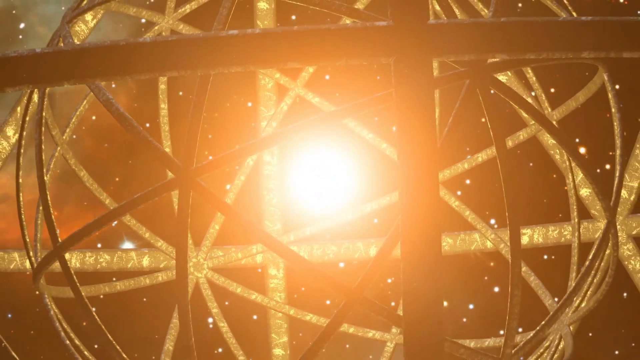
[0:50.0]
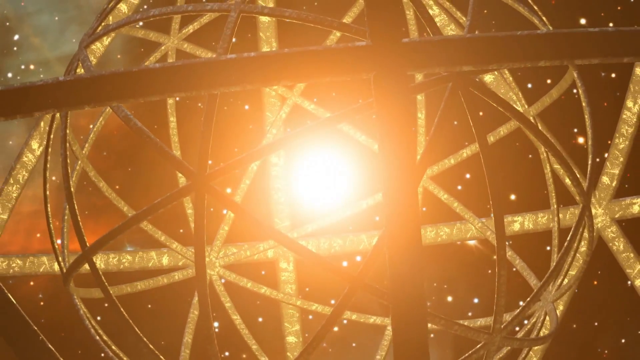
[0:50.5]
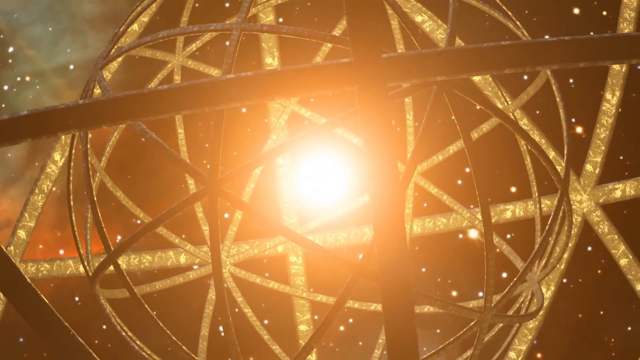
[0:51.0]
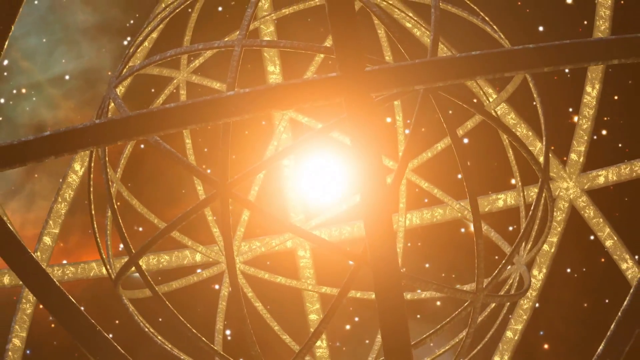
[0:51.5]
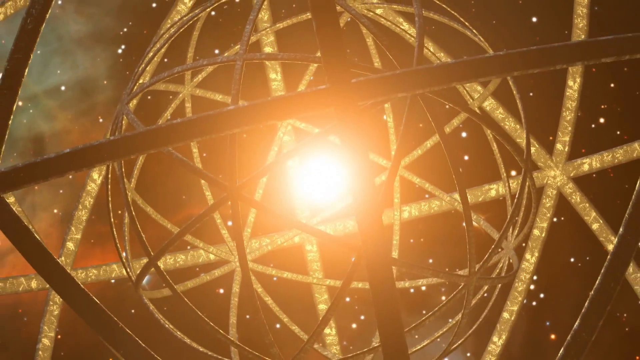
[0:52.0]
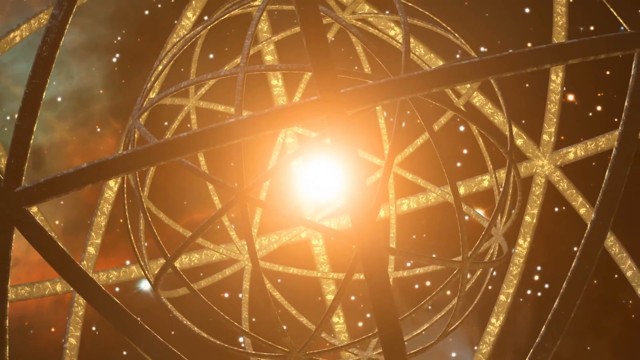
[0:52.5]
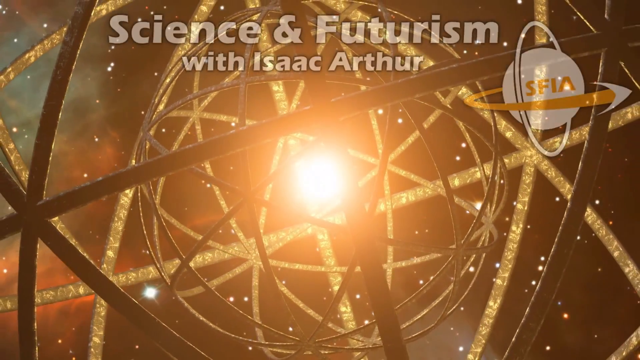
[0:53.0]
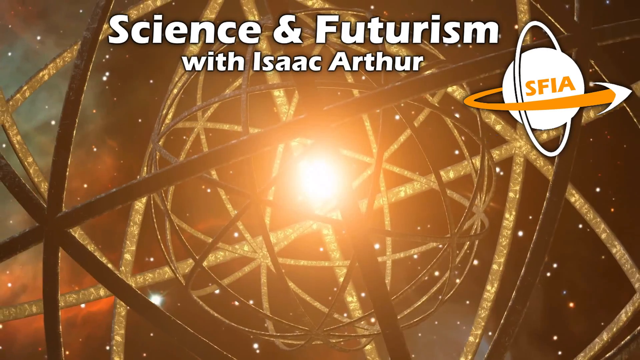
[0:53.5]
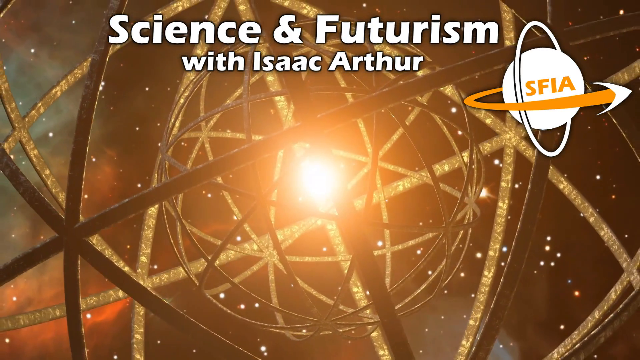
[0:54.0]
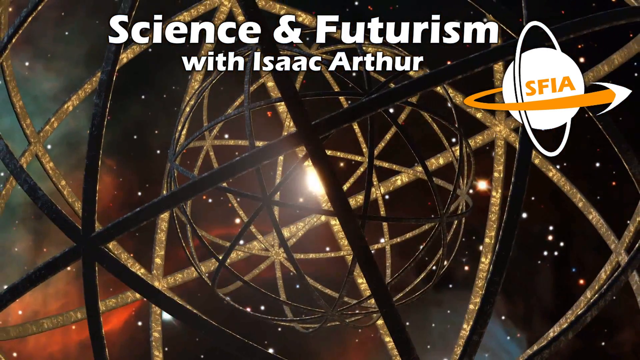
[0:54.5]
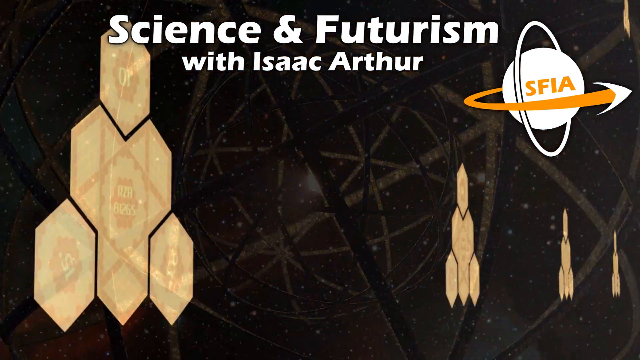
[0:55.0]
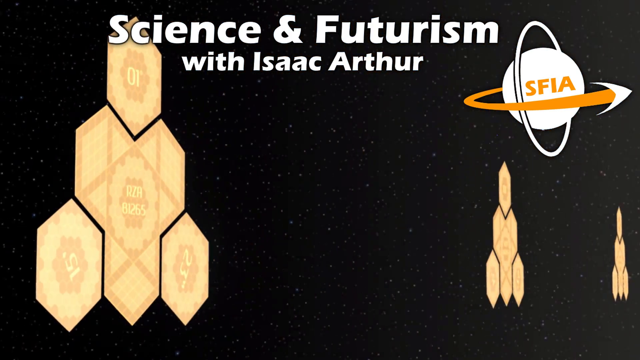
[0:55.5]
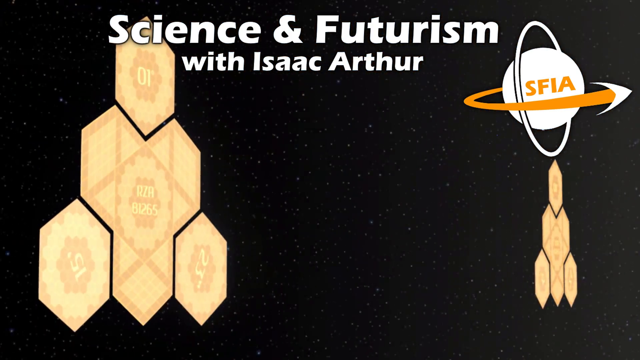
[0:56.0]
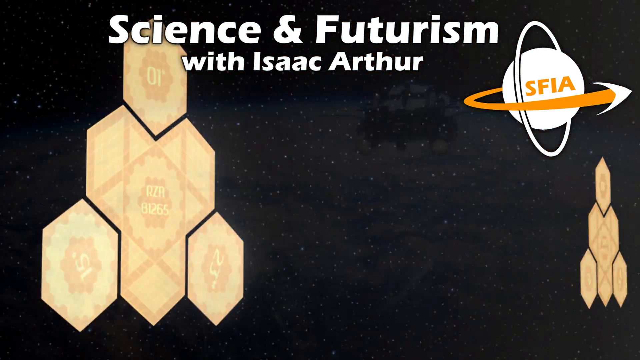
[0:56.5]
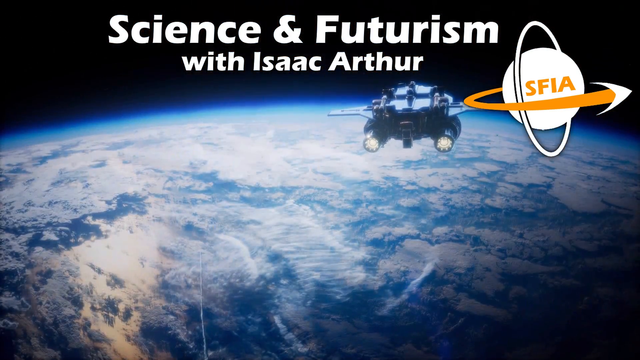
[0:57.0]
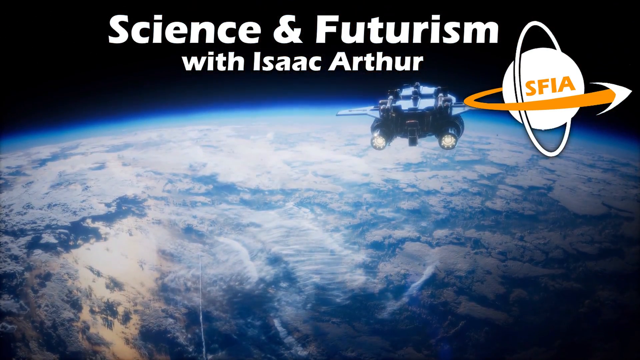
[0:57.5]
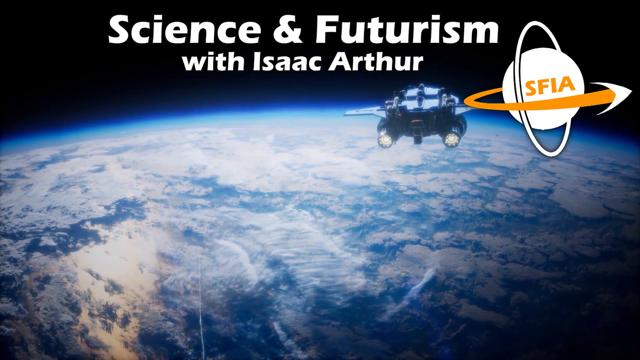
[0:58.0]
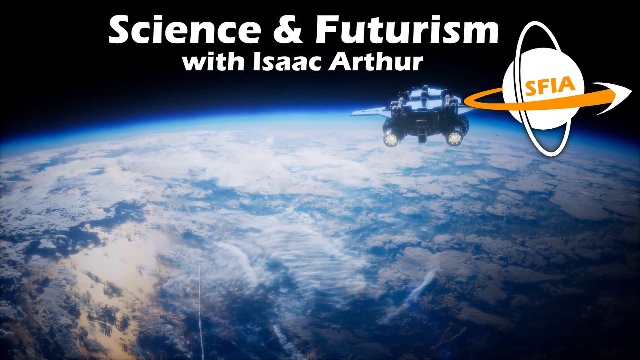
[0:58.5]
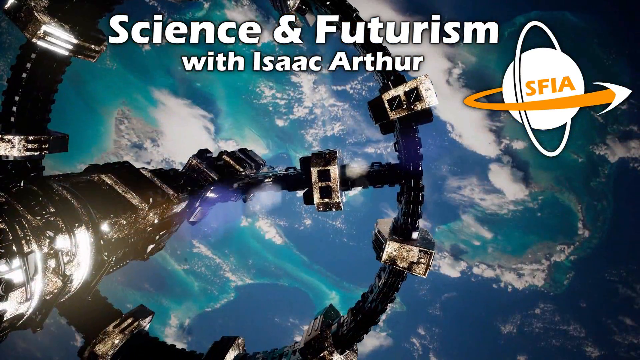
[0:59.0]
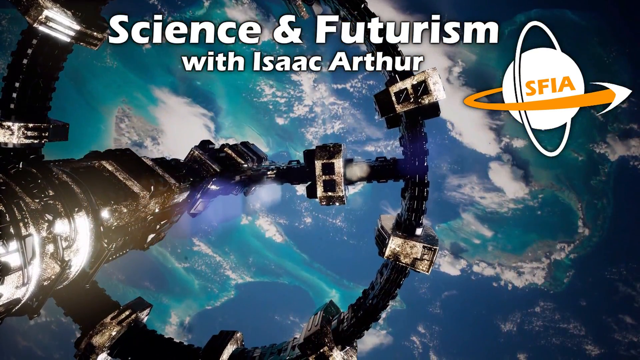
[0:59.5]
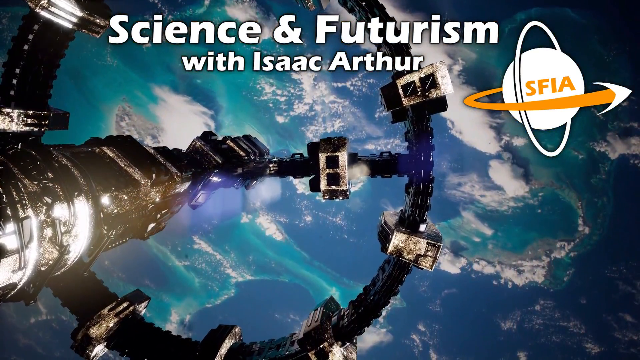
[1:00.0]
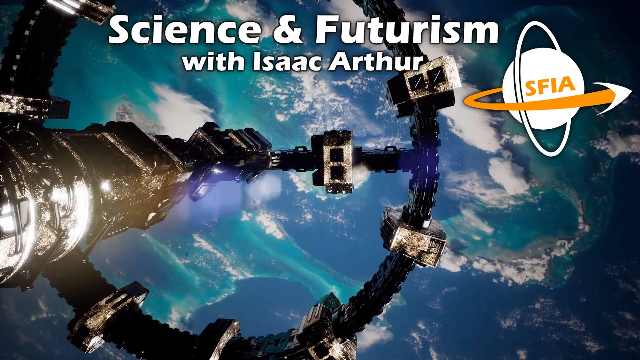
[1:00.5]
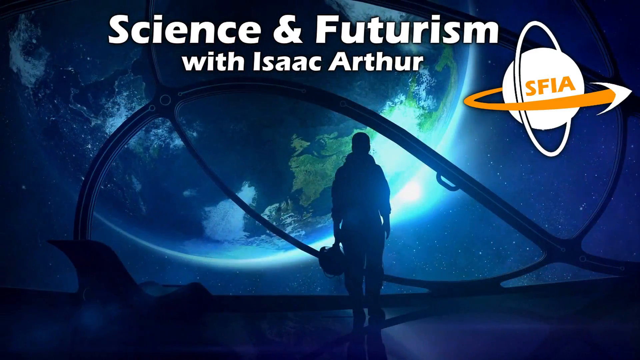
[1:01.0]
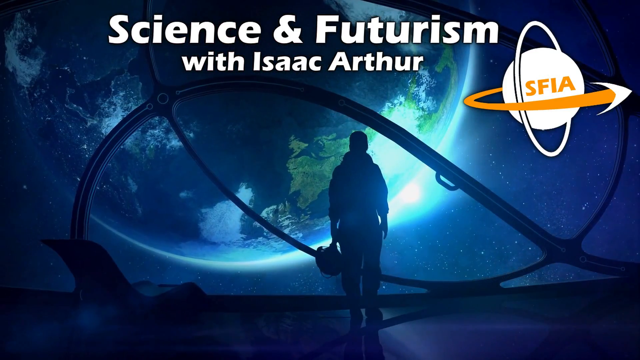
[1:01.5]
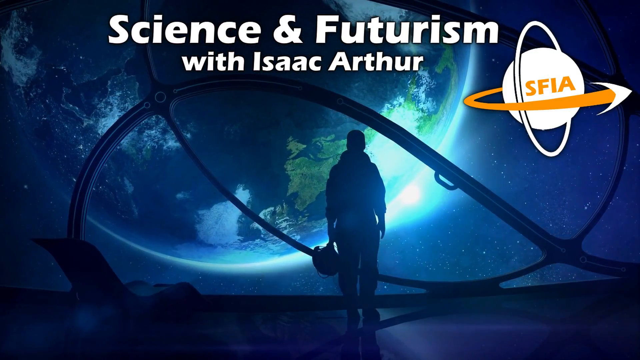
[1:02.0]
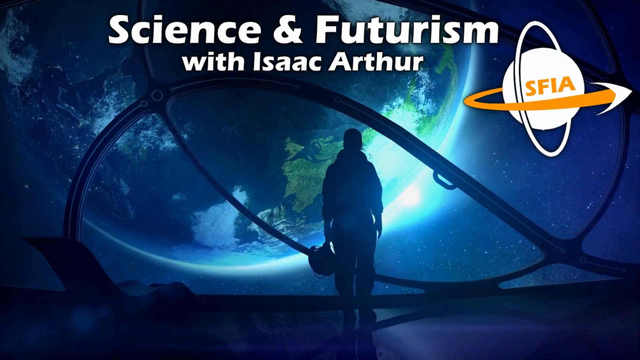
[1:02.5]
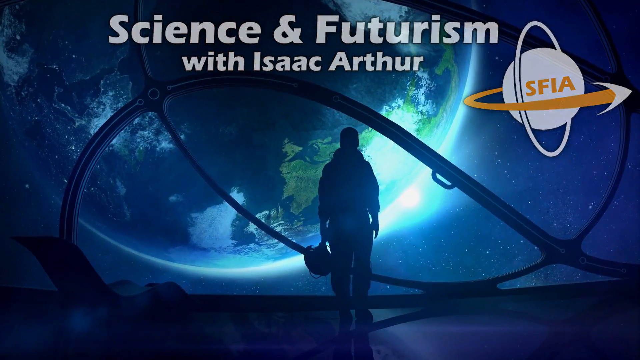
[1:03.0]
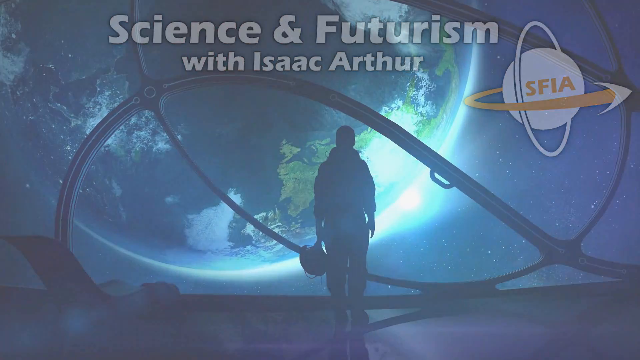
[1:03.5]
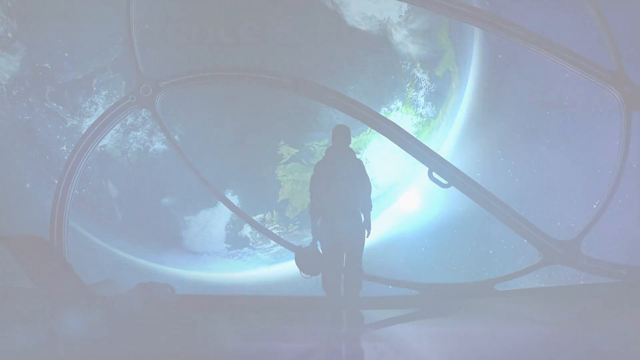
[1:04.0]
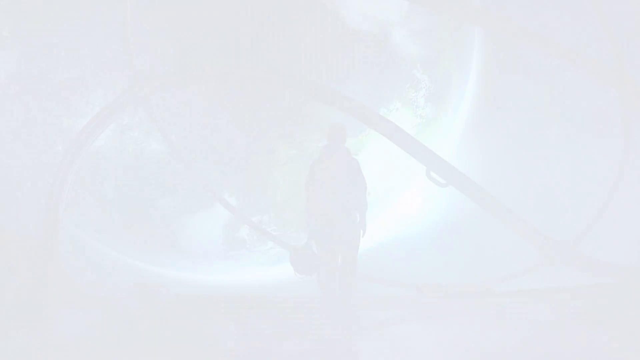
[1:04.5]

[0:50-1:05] The ball appears, resembling a cage-like metal globe like those made for a World's Fair, except that this one is amber. It is lit up by what looks like a sun in the distance, with distant stars beyond that star, and it spins, appearing amber. There is some greenery from what looks like a nebula or some celestial body. The background goes to complete blackness with white stars. Then some sort of yellow boards appear, and a craft moves slowly above Earth's atmosphere with clouds beneath it; it has two engines, one on each side. A close-up view of the International Space Station follows, with Earth beneath it showing very few clouds, landmasses that appear green, and blue water. The scene morphs into an astronaut standing, presumably inside the craft that was moving over Earth's atmosphere, inside some enclosure. He wears a spacesuit, holds his helmet in his hands, and looks at Earth. Earth shows what is possibly India, a lot of water and very few clouds, with the Sun on the other side of the planet.